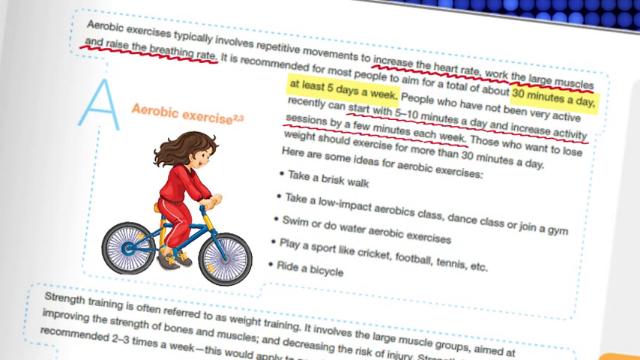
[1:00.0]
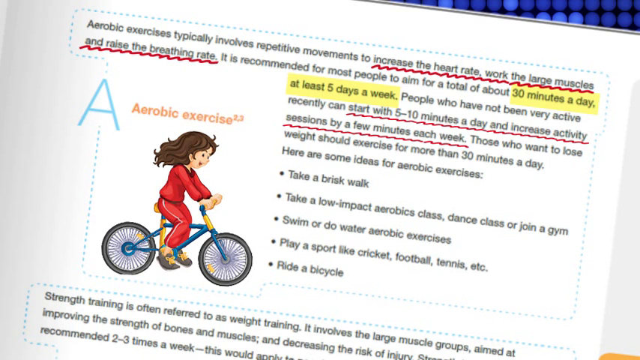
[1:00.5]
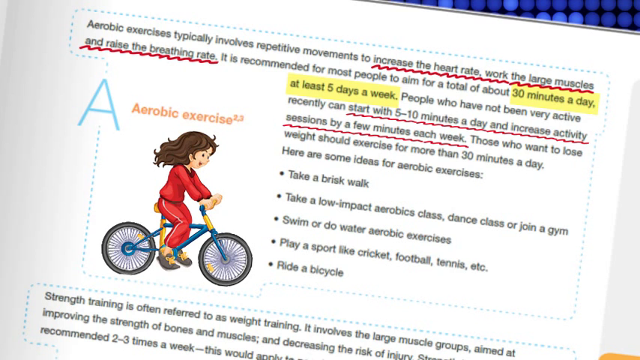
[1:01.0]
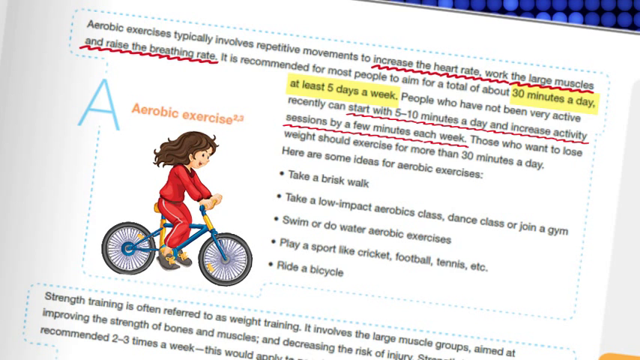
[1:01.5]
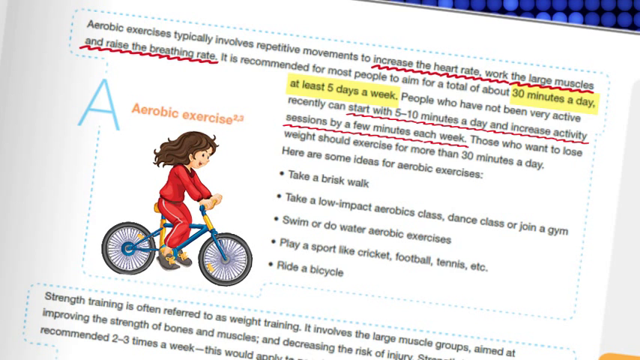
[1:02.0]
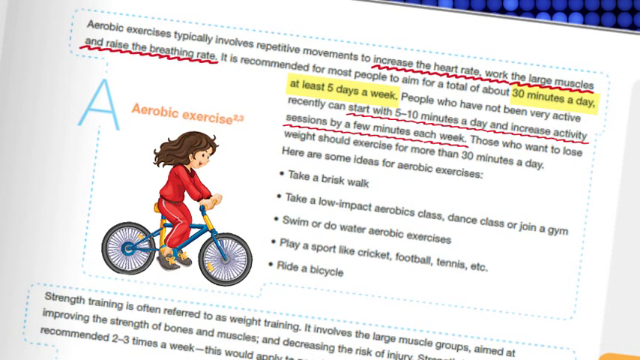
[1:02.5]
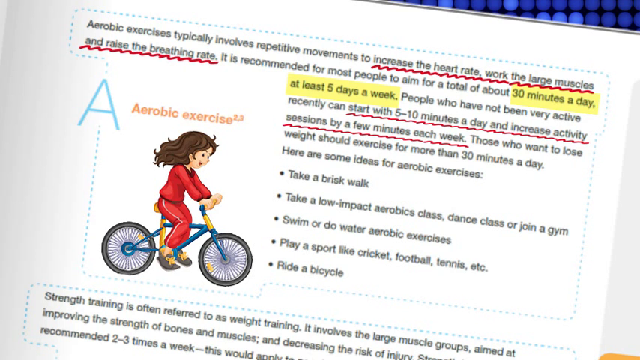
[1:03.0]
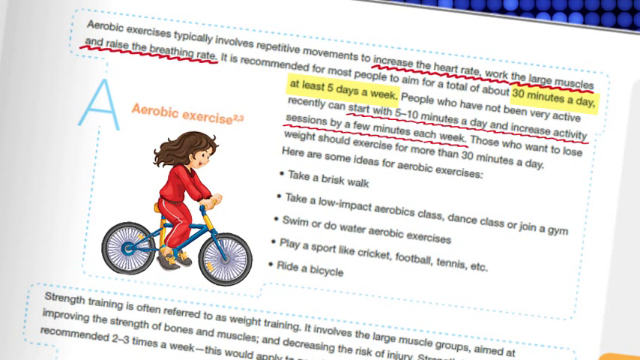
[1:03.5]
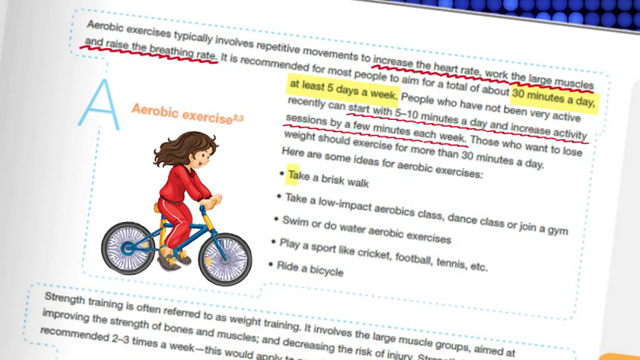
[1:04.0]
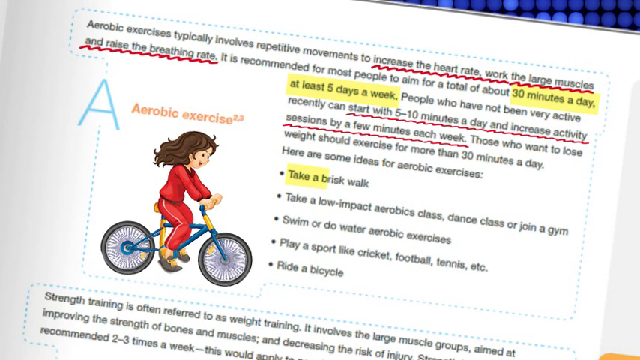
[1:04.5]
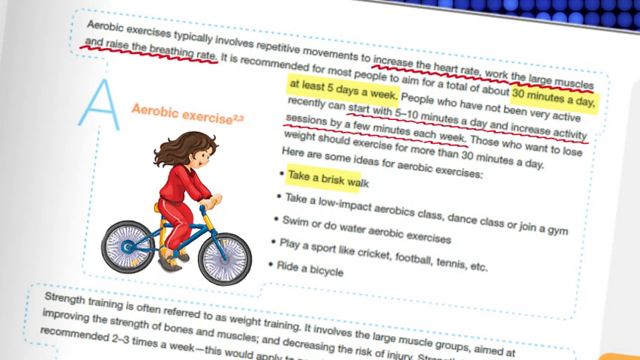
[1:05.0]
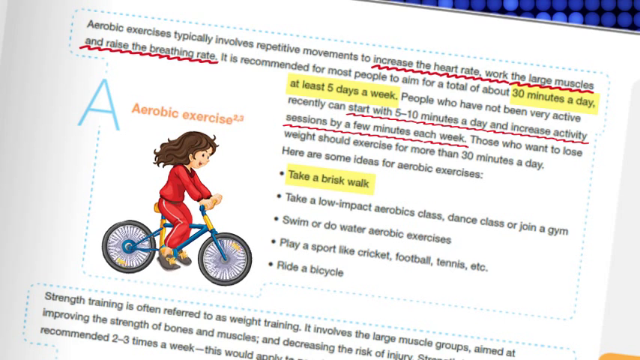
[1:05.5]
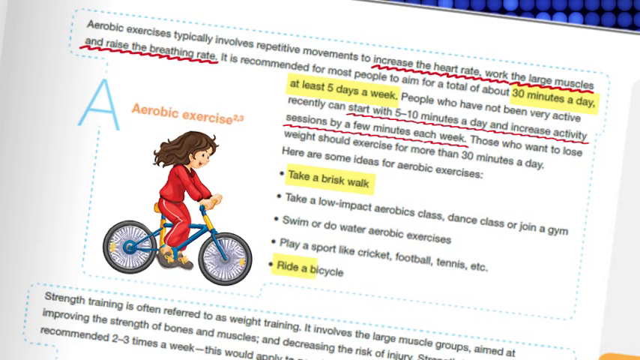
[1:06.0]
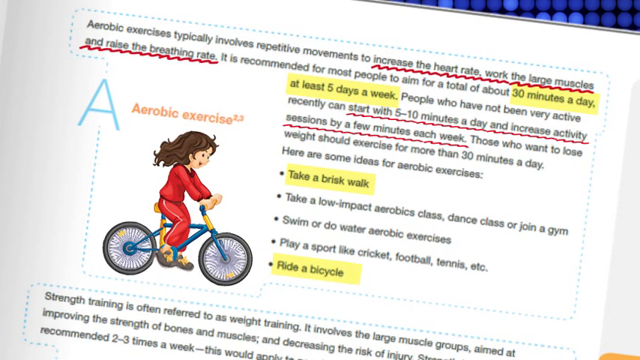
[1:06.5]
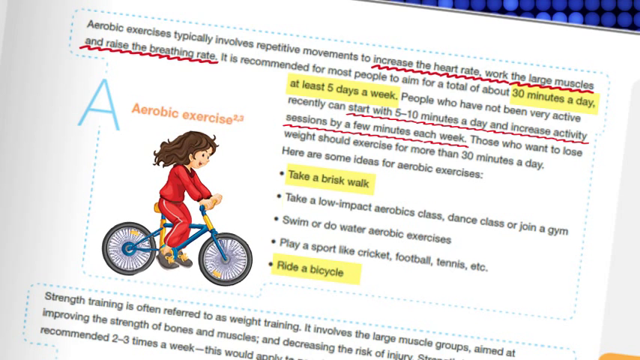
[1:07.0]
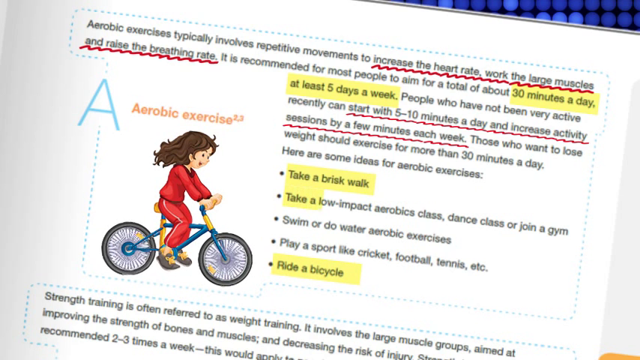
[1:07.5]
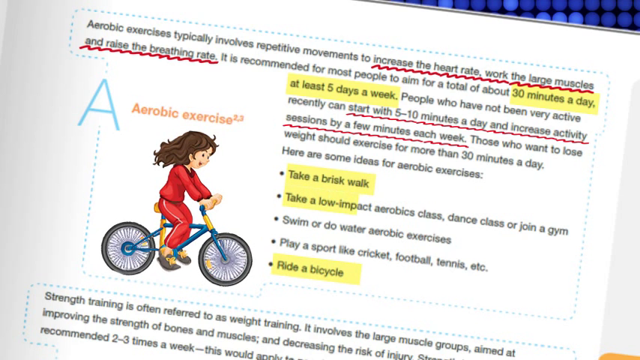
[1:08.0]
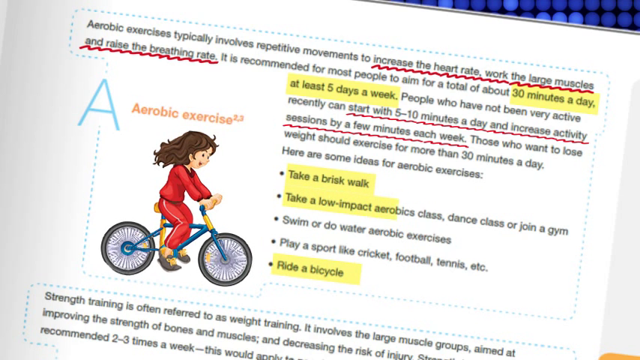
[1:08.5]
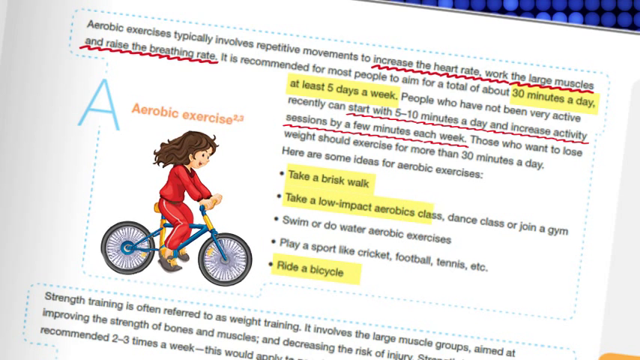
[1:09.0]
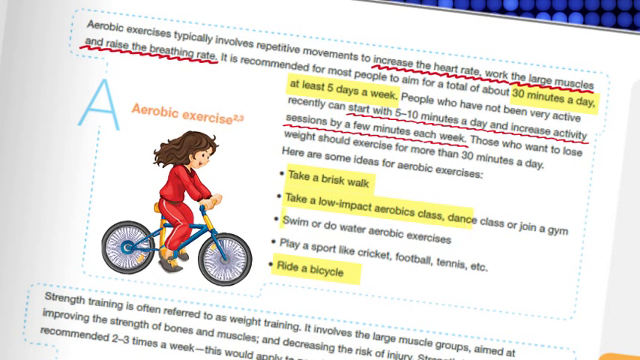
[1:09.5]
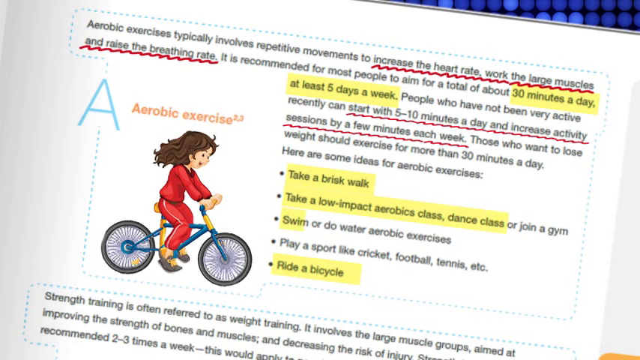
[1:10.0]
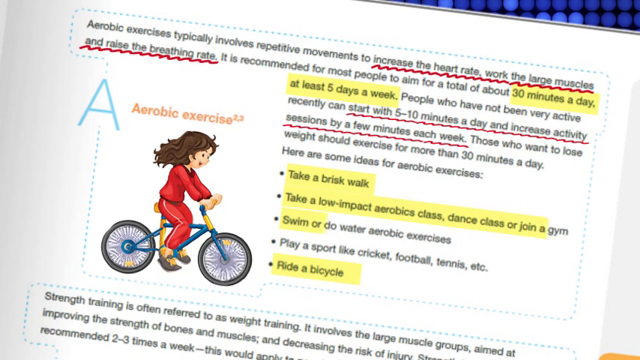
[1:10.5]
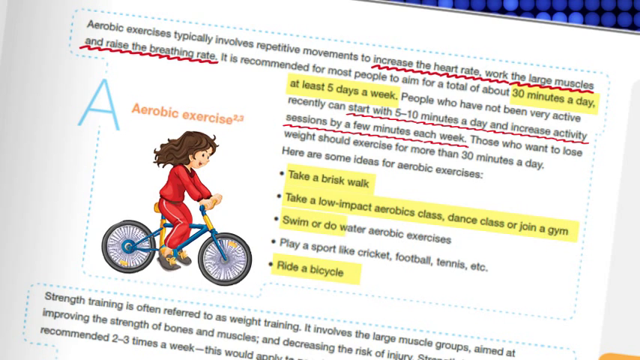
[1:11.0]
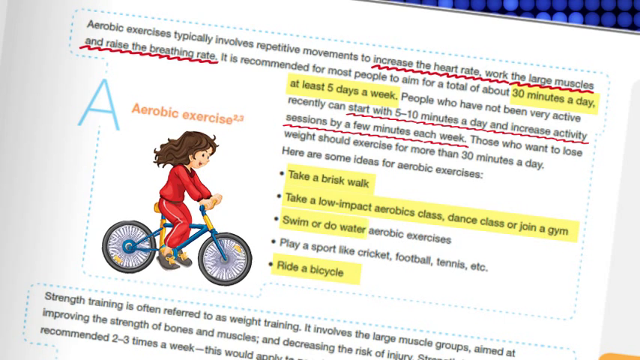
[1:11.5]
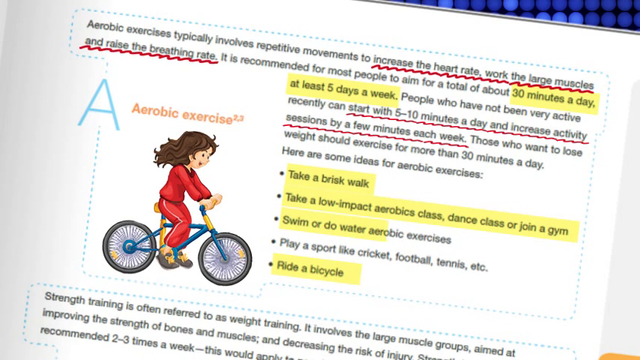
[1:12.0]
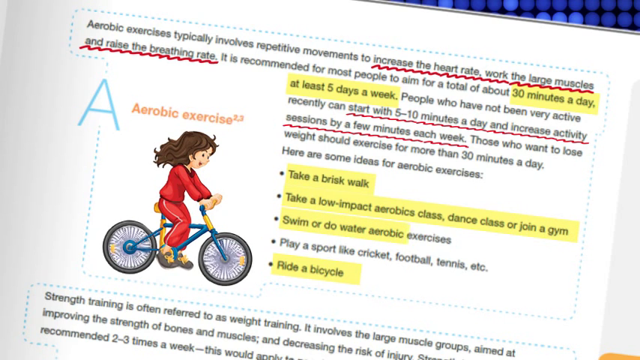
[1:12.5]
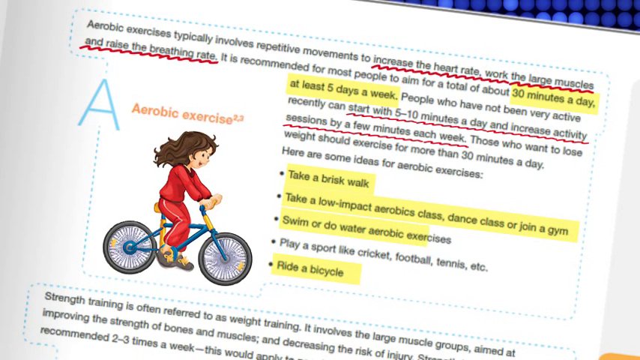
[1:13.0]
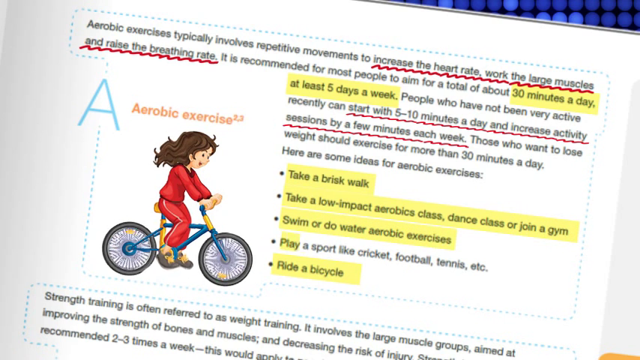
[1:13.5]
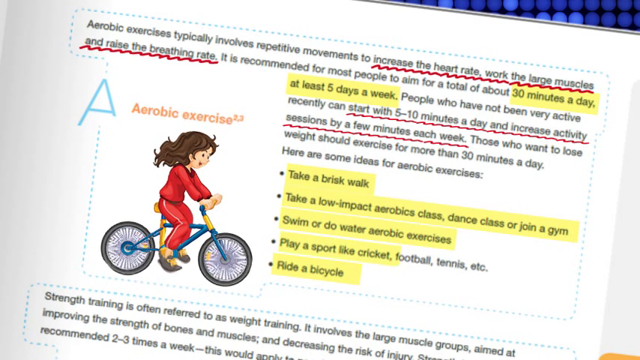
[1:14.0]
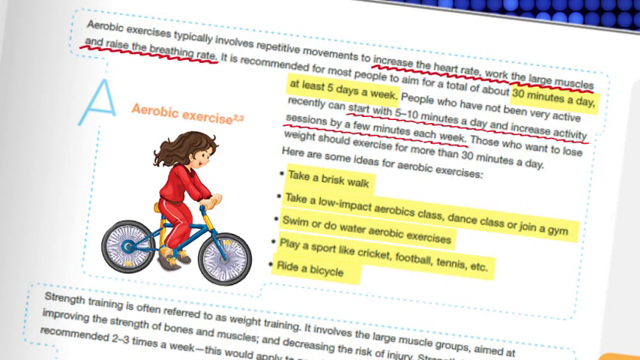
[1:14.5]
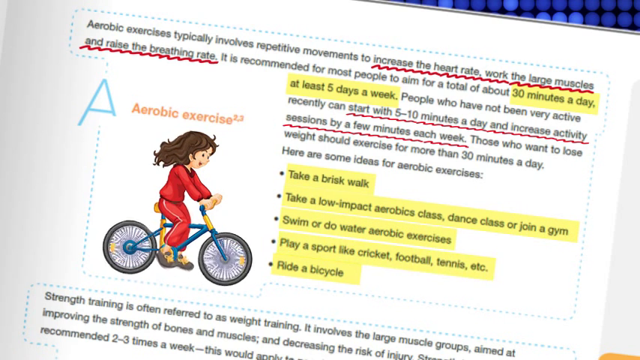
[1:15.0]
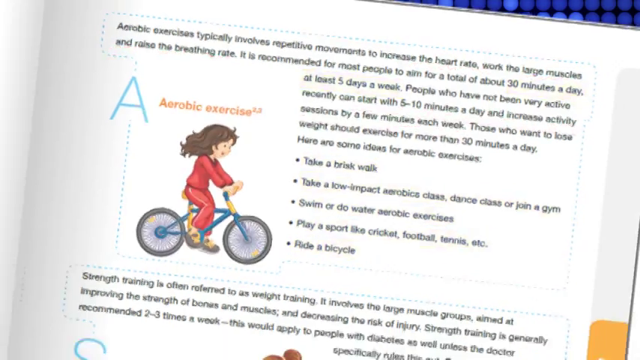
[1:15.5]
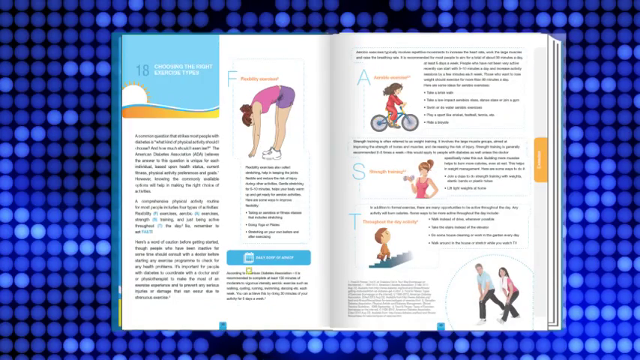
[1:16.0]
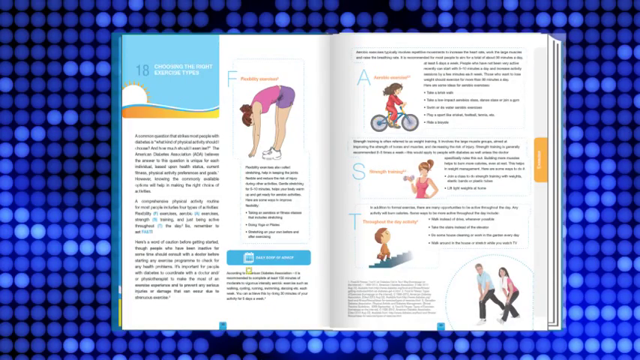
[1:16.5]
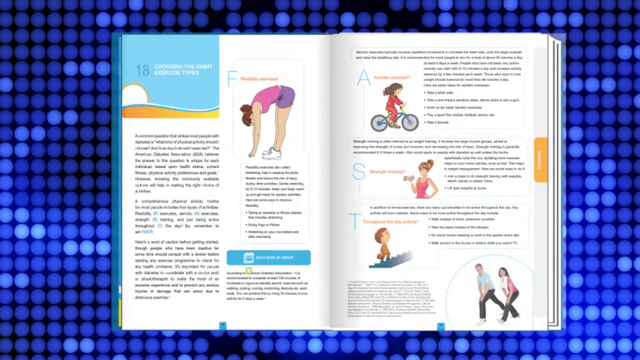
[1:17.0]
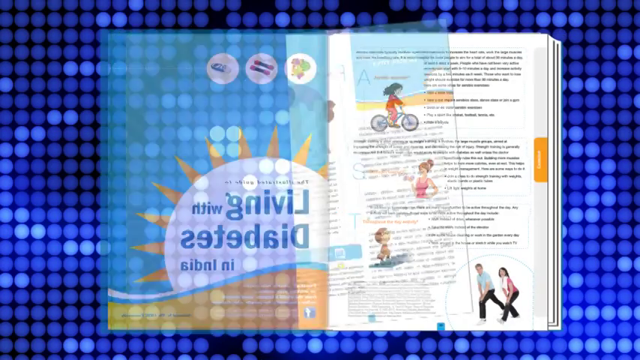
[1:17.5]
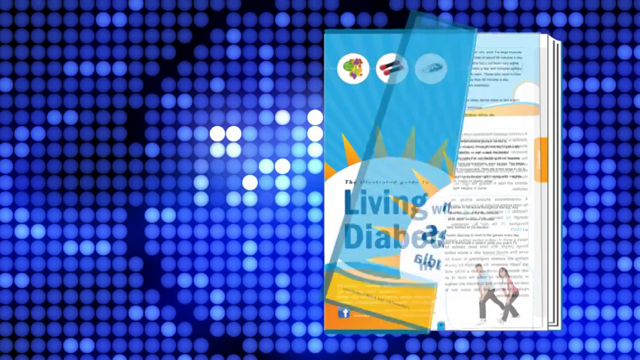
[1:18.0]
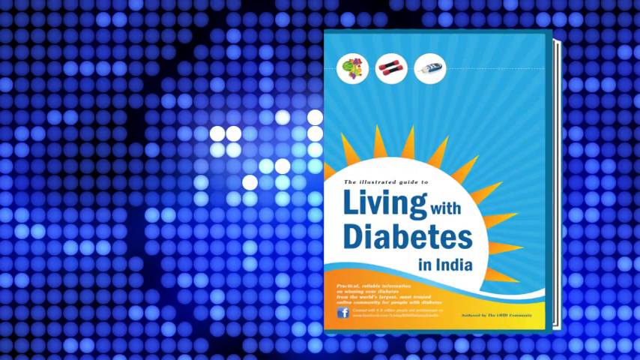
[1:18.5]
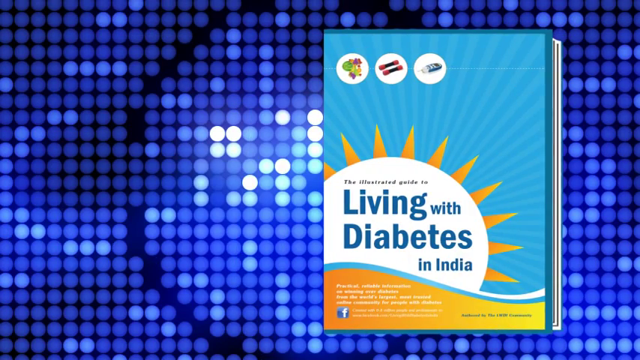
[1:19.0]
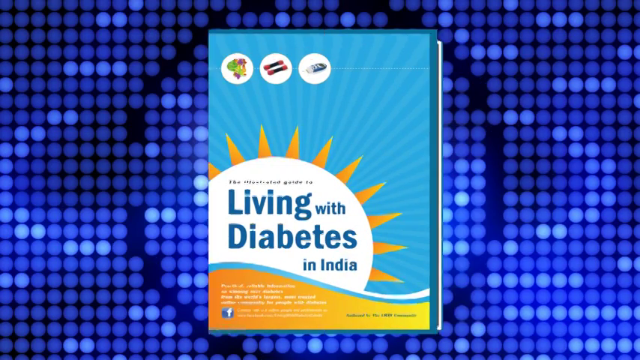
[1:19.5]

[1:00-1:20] The girl keeps moving on her bike while a set of bulleted points below a written paragraph is highlighted: "take a brisk walk," "take a low-impact aerobics class, dance class, or join a gym," "swim, or do water aerobic exercises," "play a sport like cricket, football, tennis, etc." and "ride a bike." Each bullet point is highlighted individually, not in order: first the top one, then the bottom one, then the second, third and fourth. The book then closes, and the cover with the sun and the title "Living with Diabetes in India" is seen again. The background is made of blue dots or circles of different colors that seem sort of random but form some patterns. Behind the circles is a background that is black on top and blue on the bottom, visible through the circles.